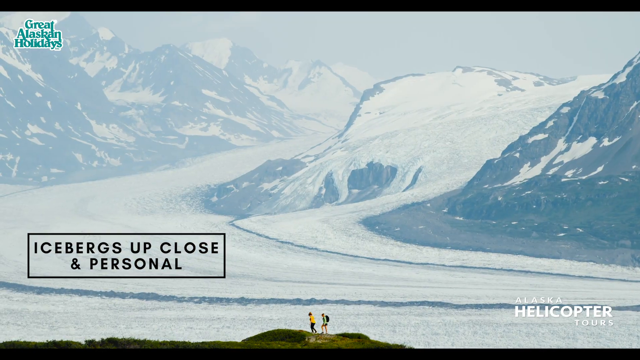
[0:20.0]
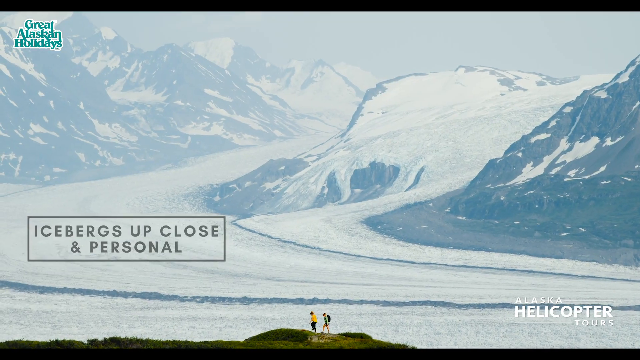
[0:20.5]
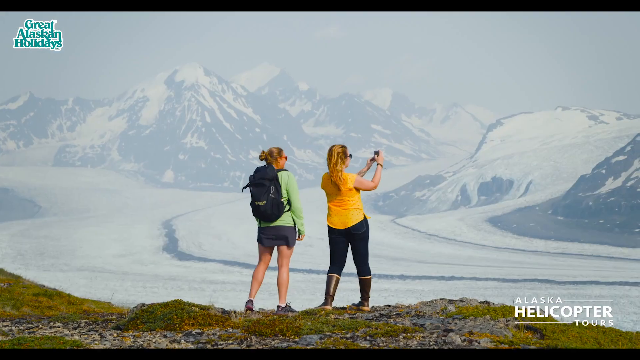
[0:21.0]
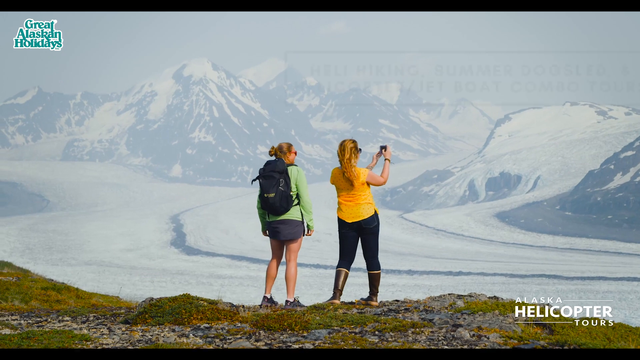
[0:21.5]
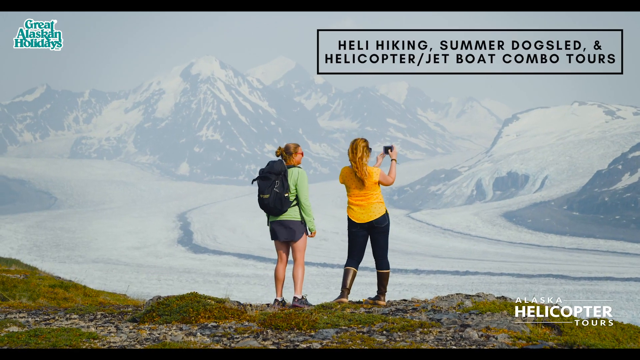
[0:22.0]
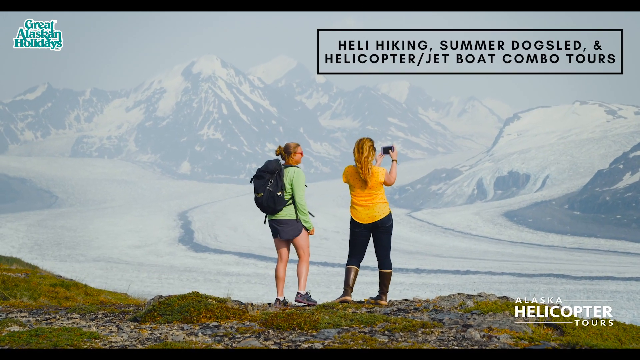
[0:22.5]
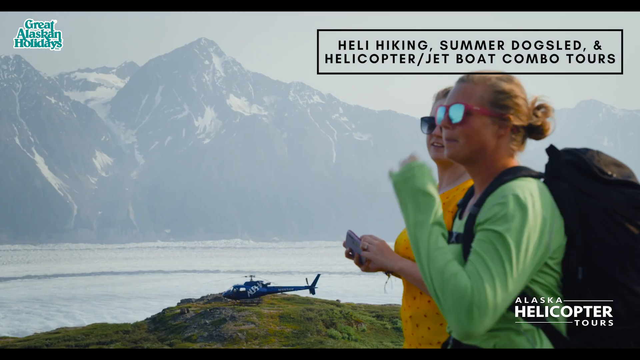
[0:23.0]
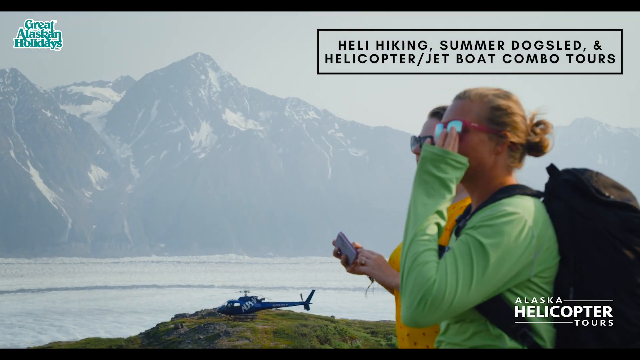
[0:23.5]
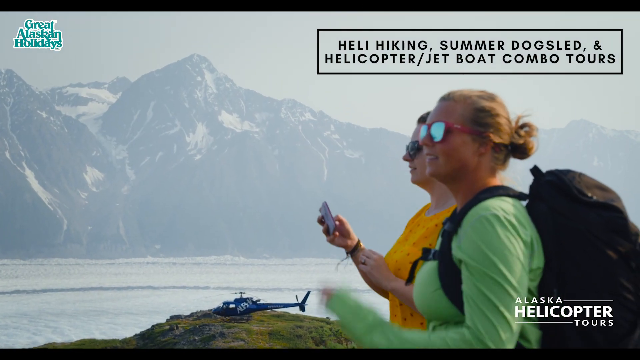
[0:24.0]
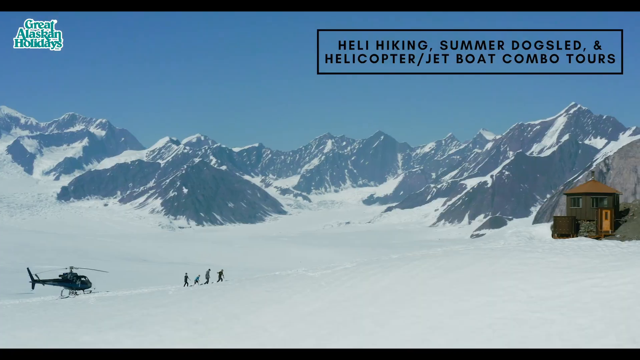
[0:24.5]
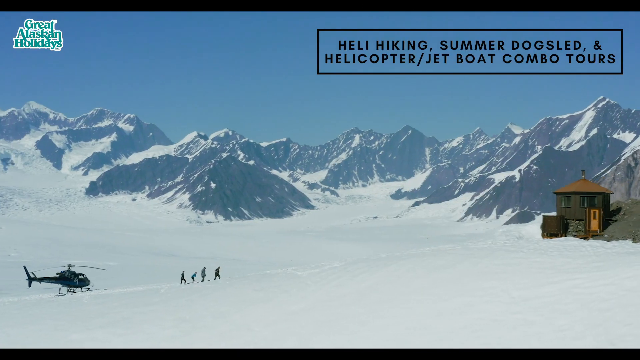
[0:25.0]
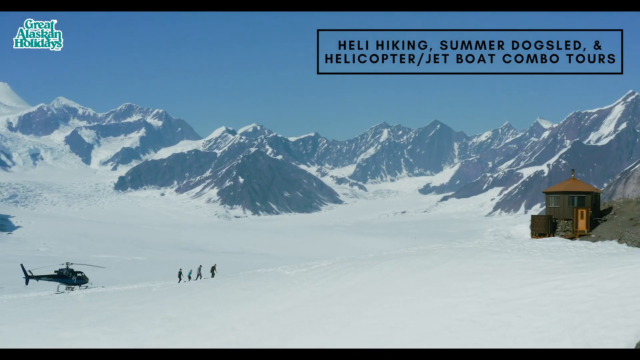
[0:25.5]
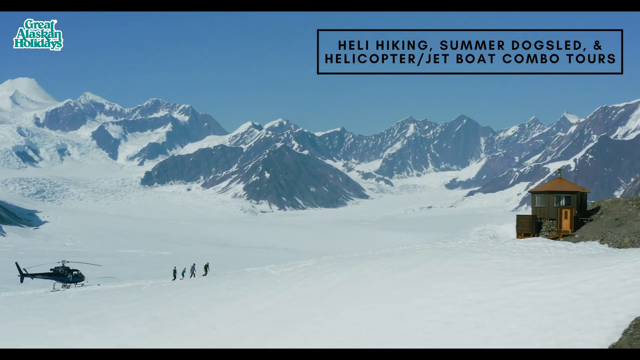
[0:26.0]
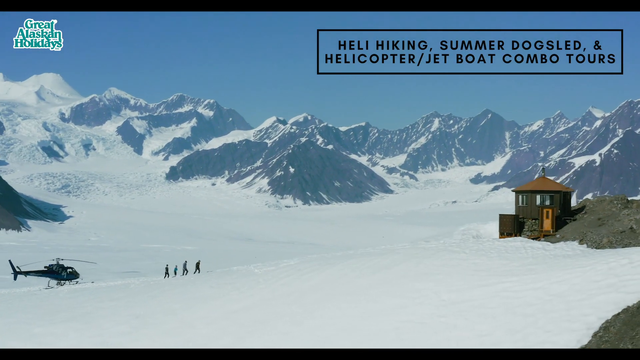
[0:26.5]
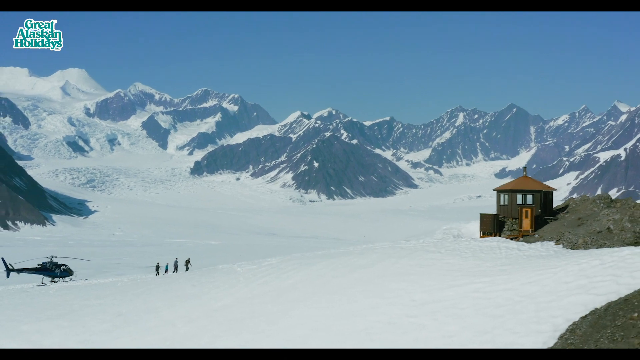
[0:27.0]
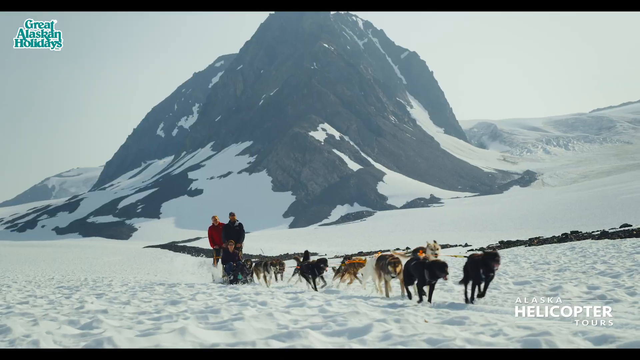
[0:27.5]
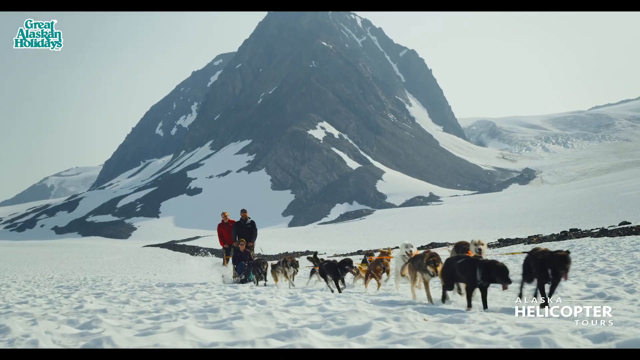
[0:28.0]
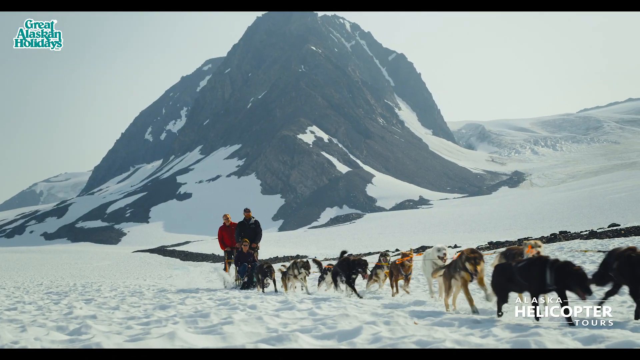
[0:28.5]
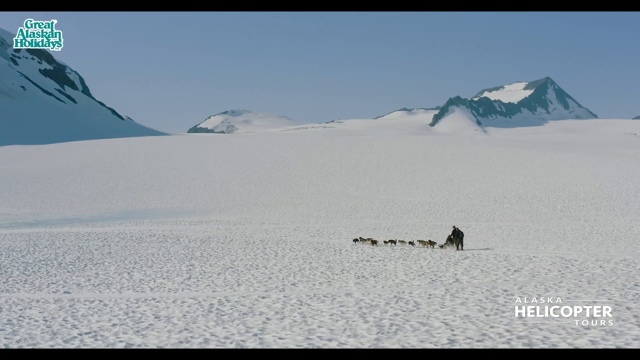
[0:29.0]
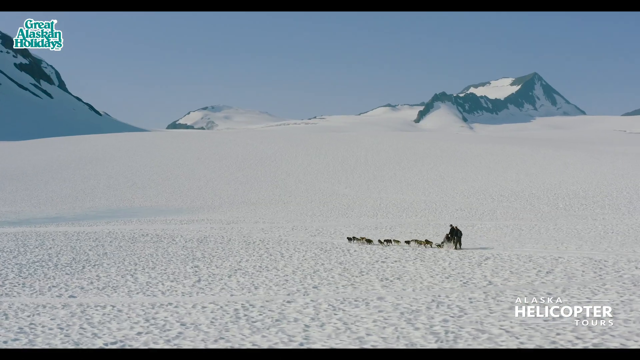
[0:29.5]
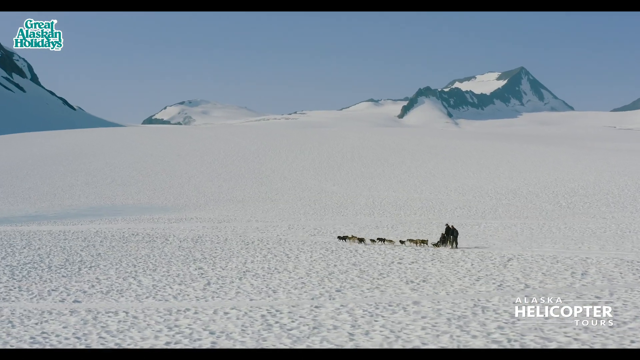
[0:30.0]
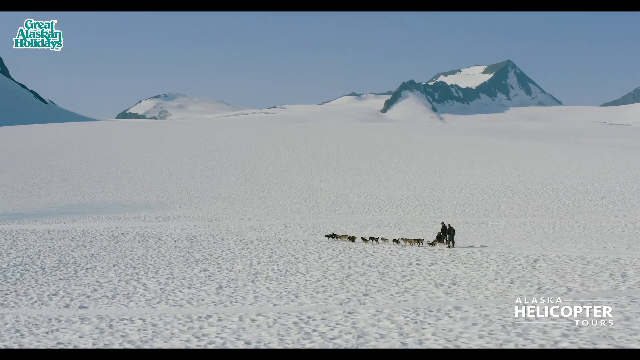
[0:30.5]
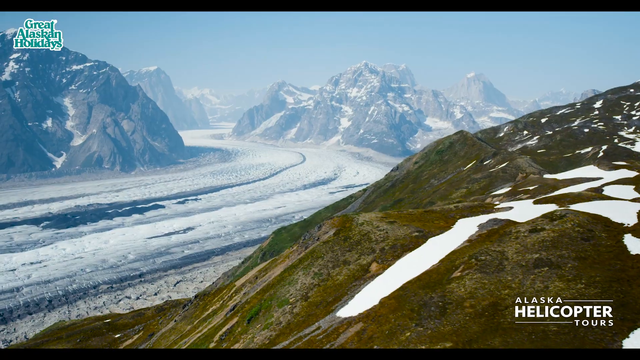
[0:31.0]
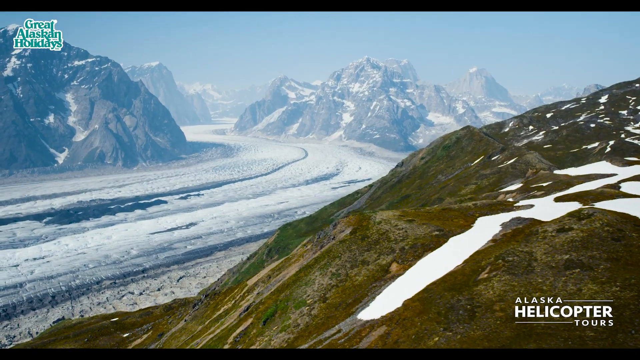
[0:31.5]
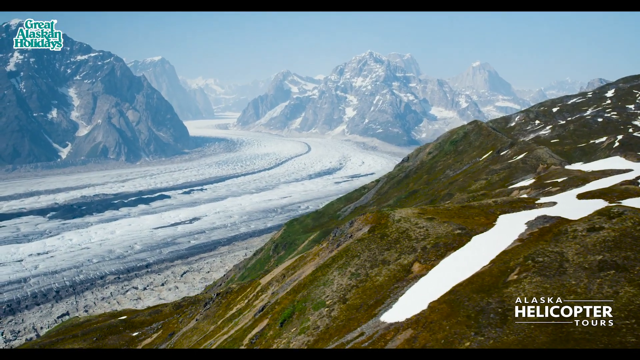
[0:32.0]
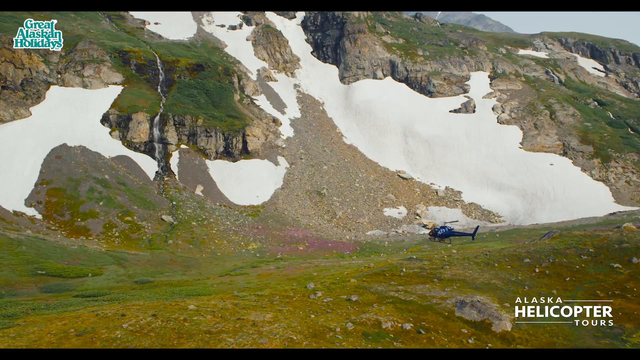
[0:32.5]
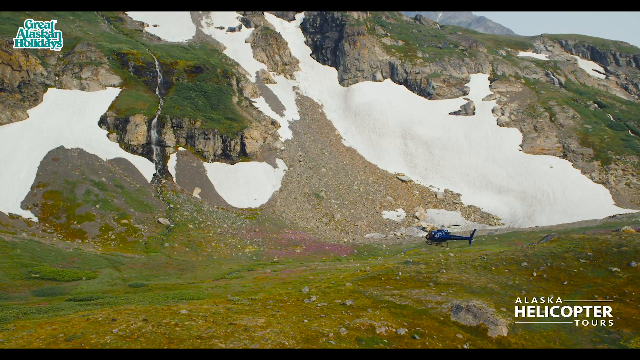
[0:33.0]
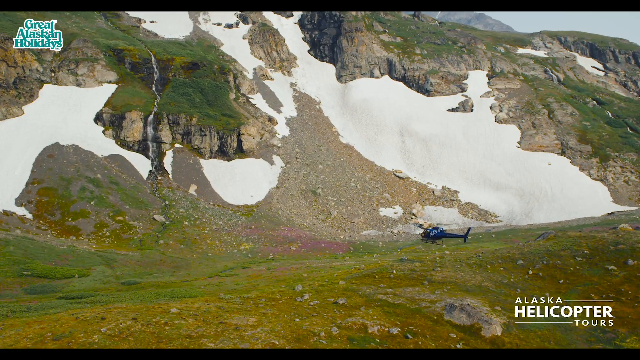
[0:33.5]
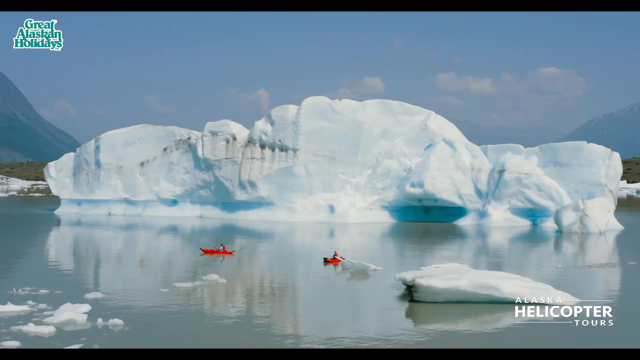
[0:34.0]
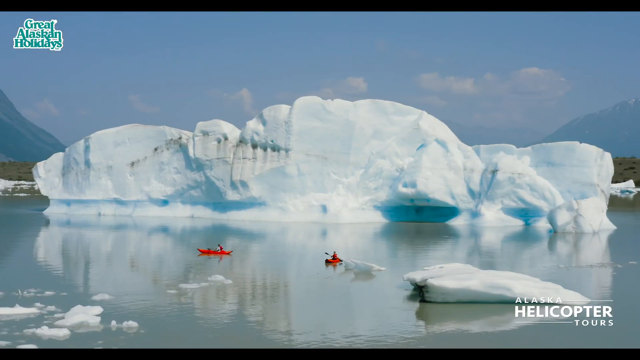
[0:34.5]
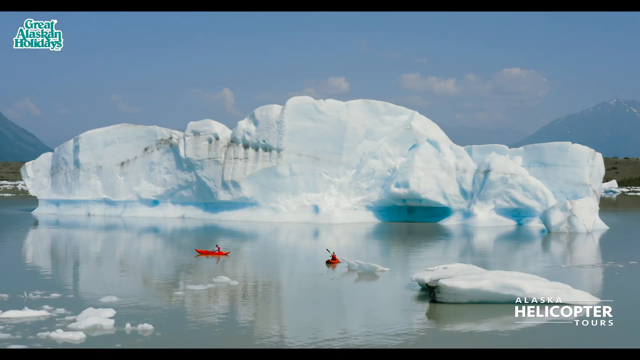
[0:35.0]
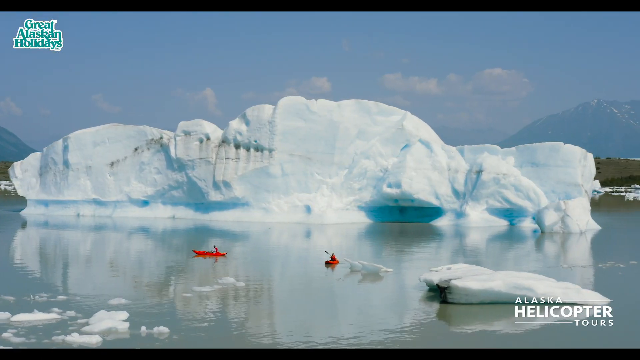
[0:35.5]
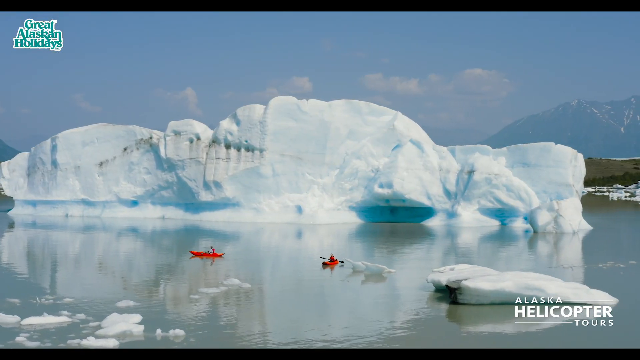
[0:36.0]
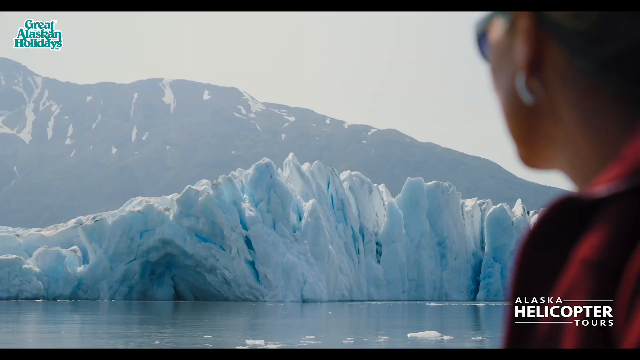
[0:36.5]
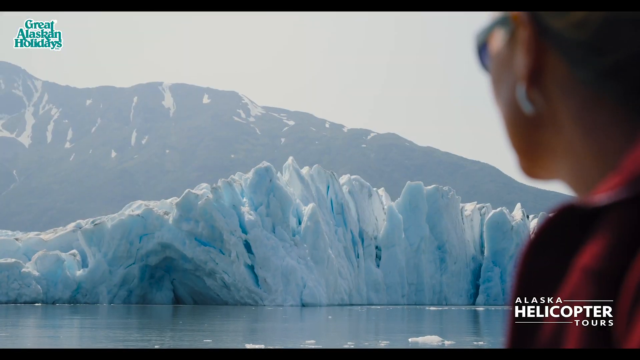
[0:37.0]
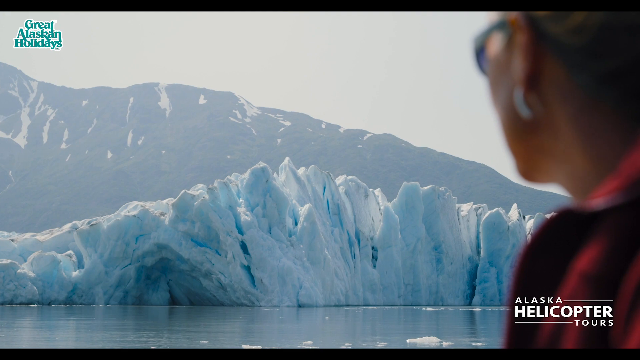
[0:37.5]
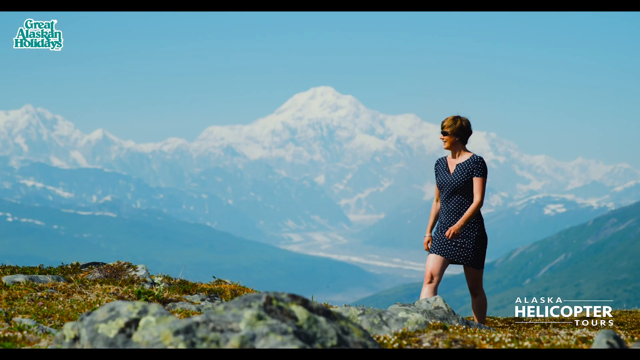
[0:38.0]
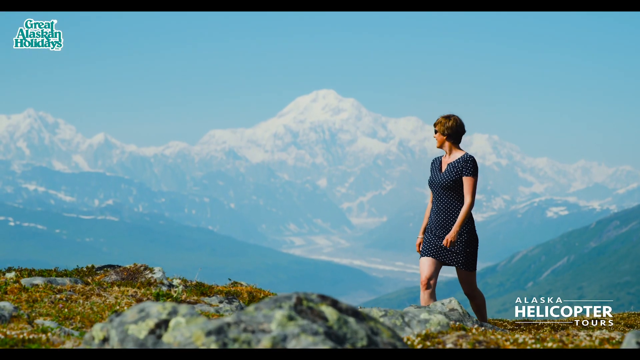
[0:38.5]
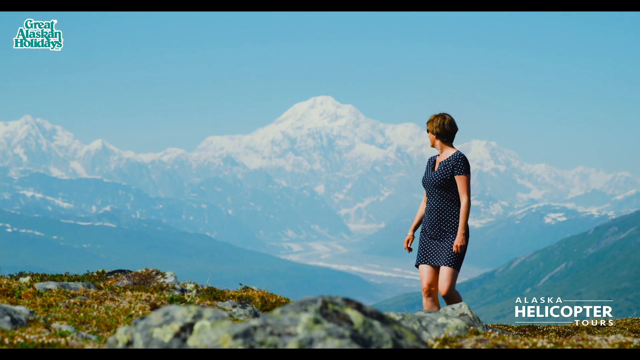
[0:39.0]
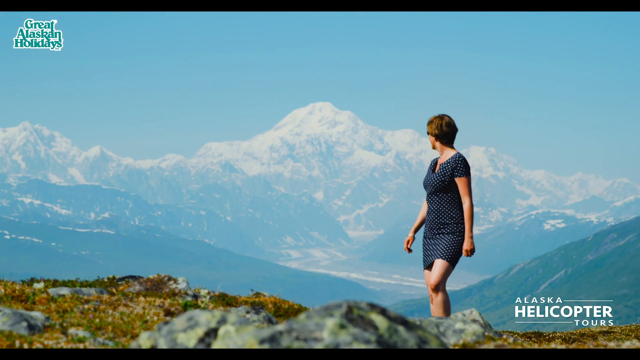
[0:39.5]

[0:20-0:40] A snowy and rocky mountainous landscape is shown, with a box in the bottom left of the screen containing the words "icebergs up close and personal". In the very centre of the screen, two hikers stand on a rocky outcrop, lifting their legs as they climb up slightly. A close-up shows they are two women: the woman on the left wears a green top, a backpack and blue shorts, and the woman on the right wears a yellow short-sleeve top, black leggings and boots. The words "heli-hiking, summer dog sled, and helicopter jet boat combo tours" are written in the top right of the screen, "Great Alaskan Holidays" in the top left, and "Alaska helicopter tours" at the bottom left. The women smile as they view the landscape. Next, four people climb towards a small hut with a helicopter behind them. In the next shot, a dog sled pulled by a number of dogs carries three people towards the screen, and they disappear off the right-hand side of the screen as the sled is pulled towards the viewer. The mountain landscape then appears with a helicopter on the grassy machair next to it. People kayak against a large iceberg, and a woman in a polka dot dress walks up a mountain.